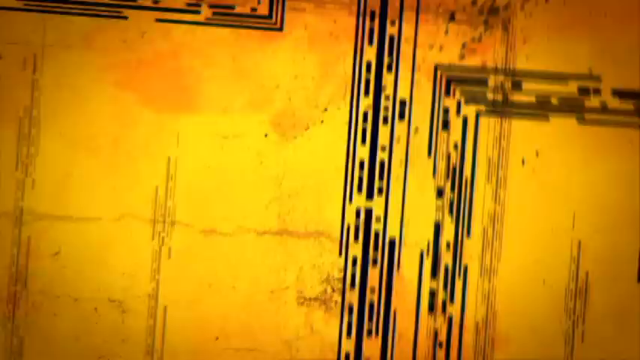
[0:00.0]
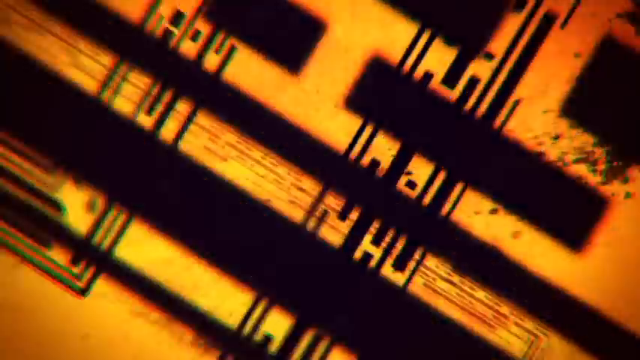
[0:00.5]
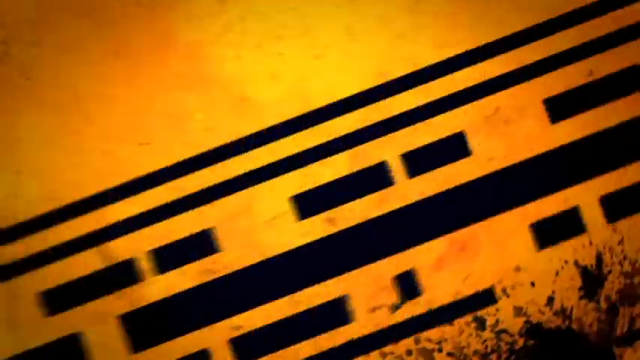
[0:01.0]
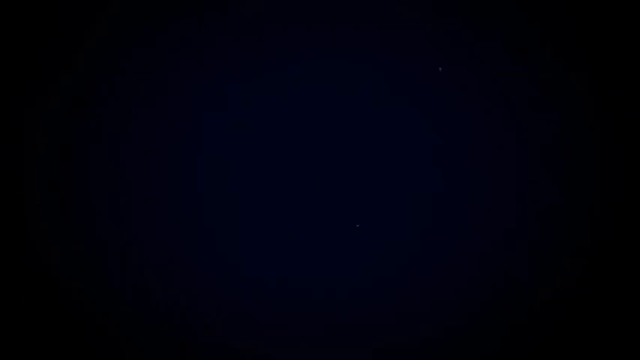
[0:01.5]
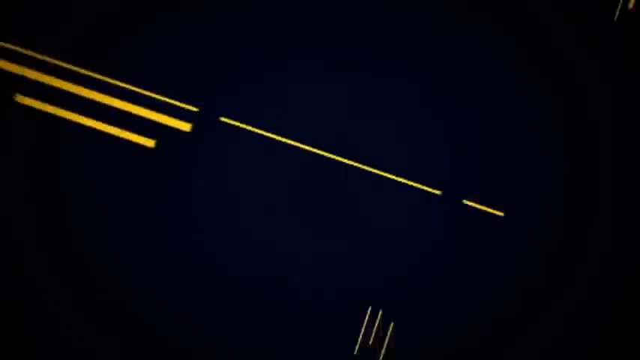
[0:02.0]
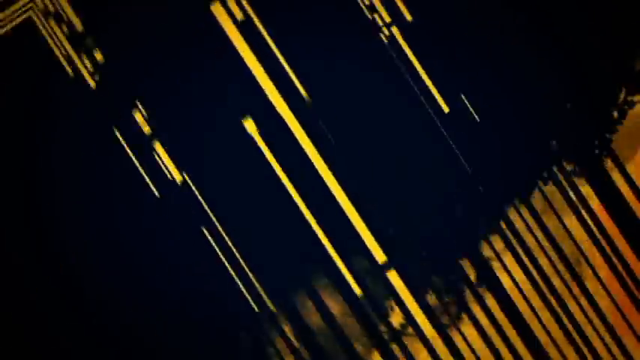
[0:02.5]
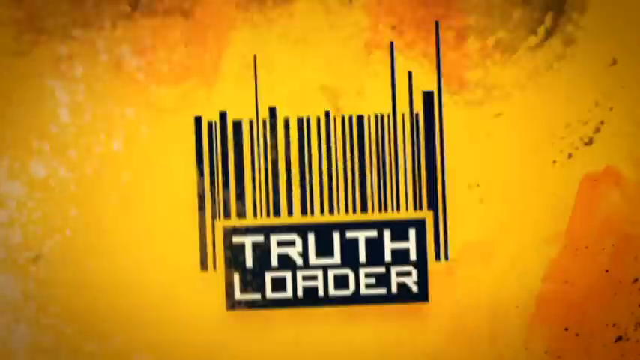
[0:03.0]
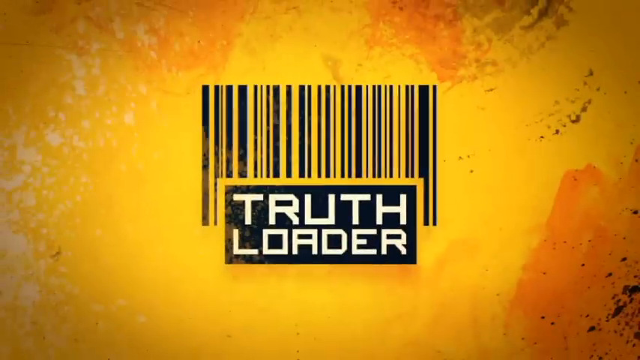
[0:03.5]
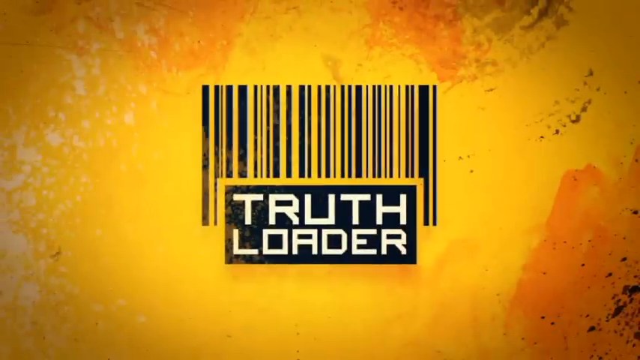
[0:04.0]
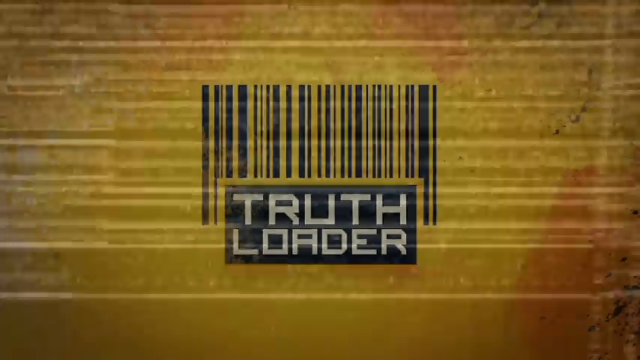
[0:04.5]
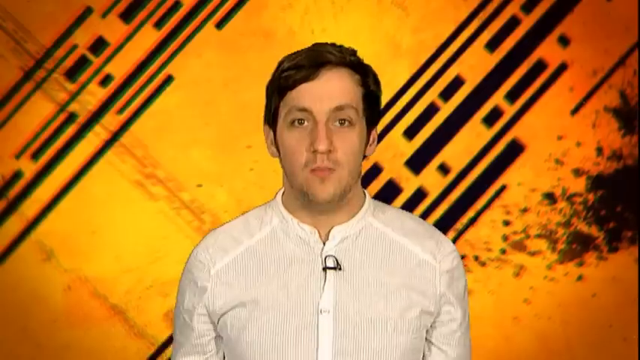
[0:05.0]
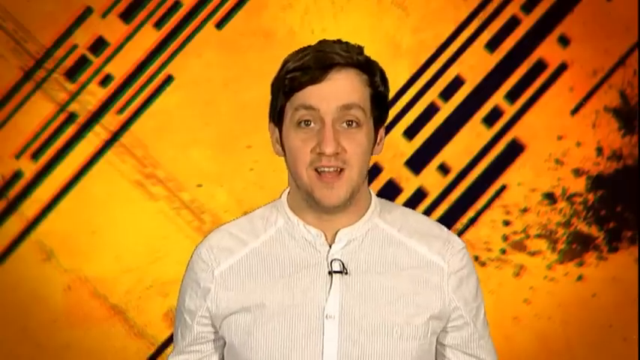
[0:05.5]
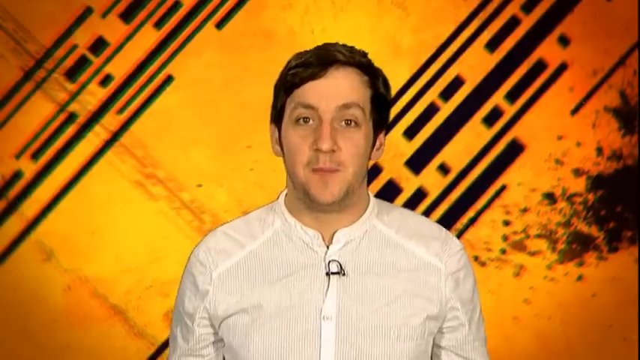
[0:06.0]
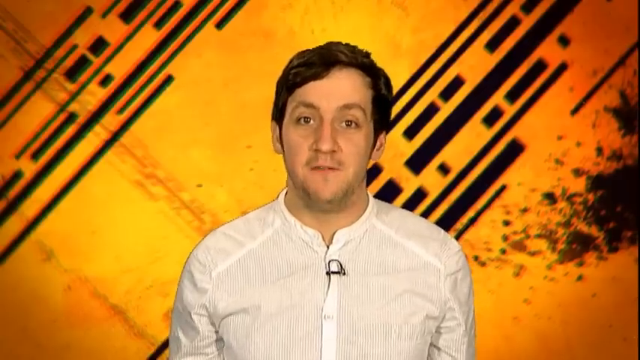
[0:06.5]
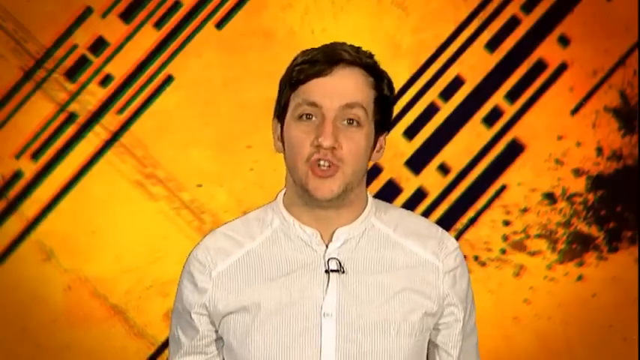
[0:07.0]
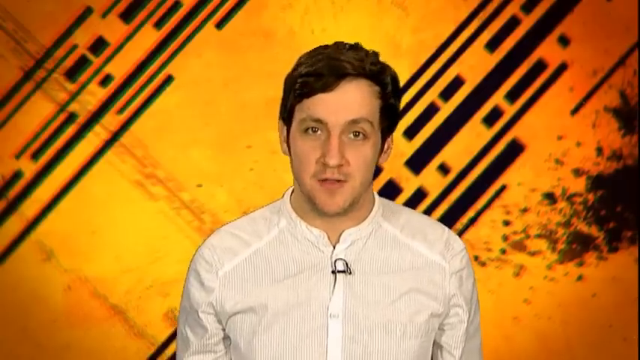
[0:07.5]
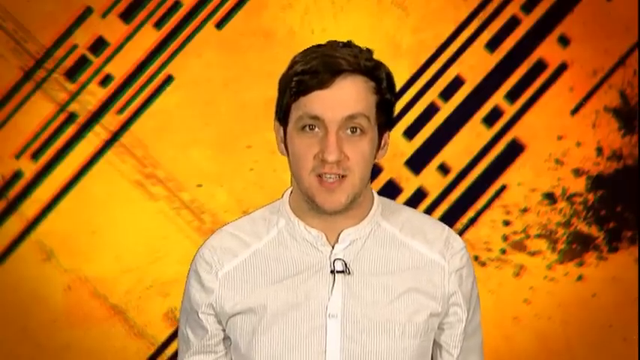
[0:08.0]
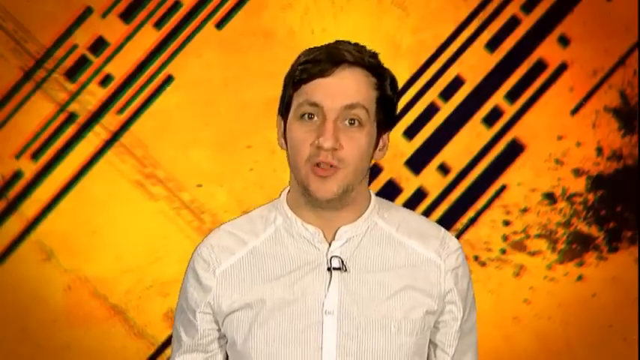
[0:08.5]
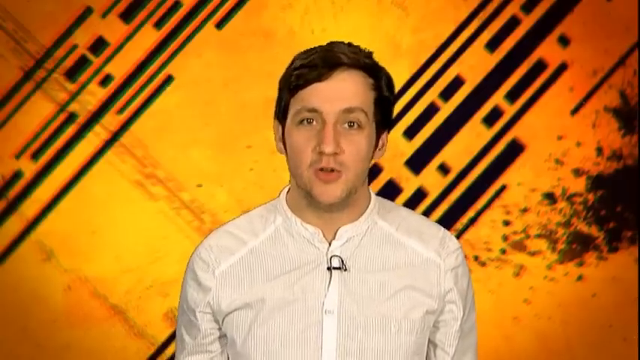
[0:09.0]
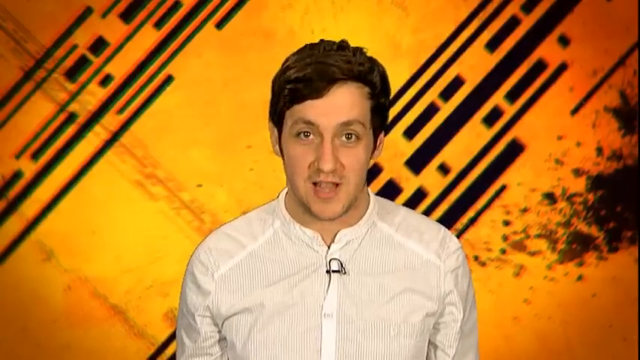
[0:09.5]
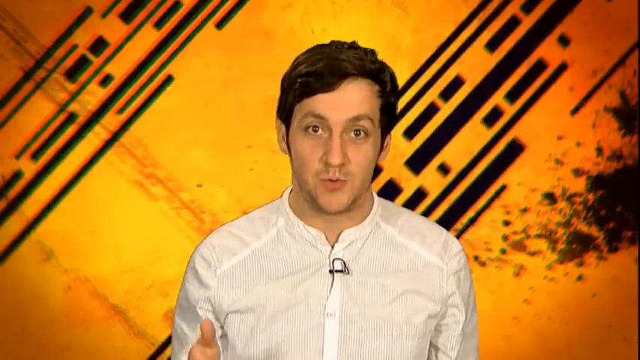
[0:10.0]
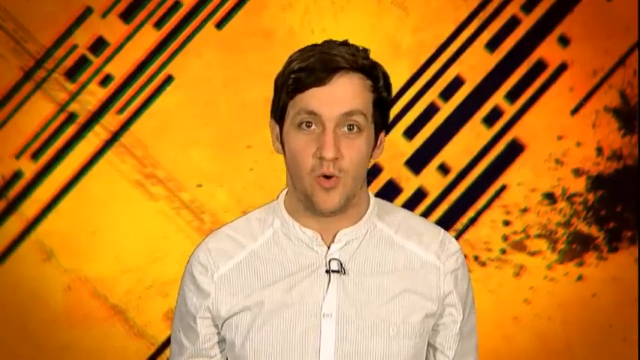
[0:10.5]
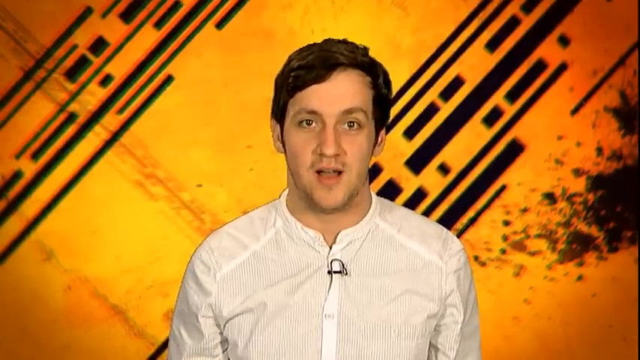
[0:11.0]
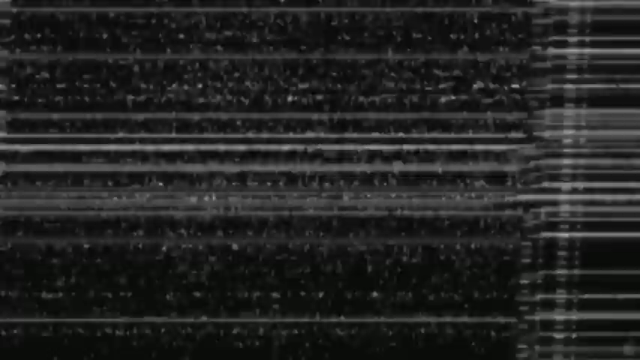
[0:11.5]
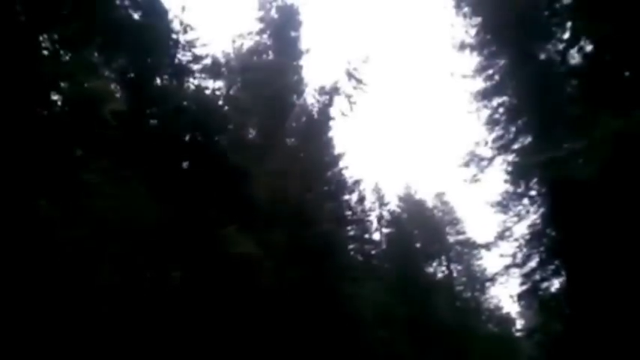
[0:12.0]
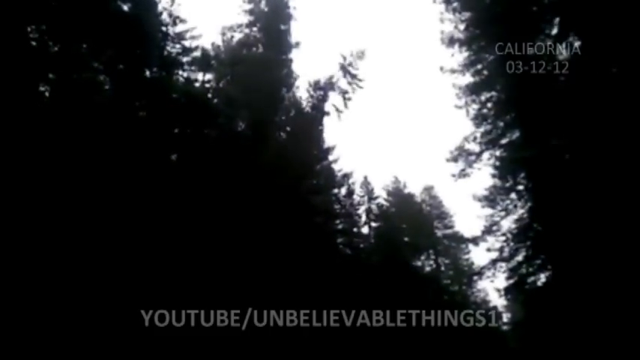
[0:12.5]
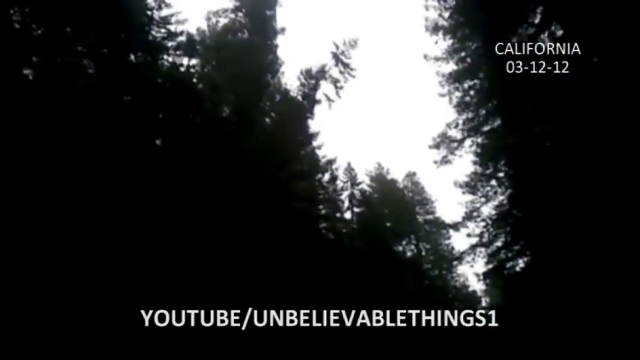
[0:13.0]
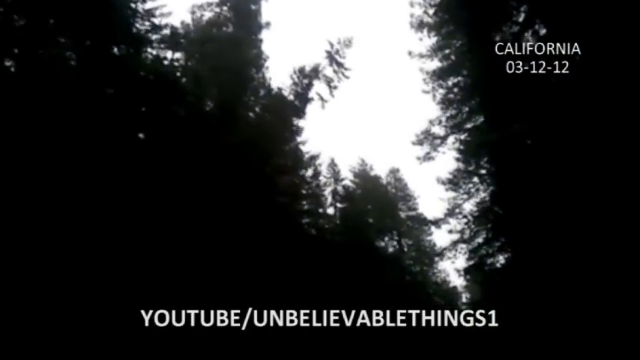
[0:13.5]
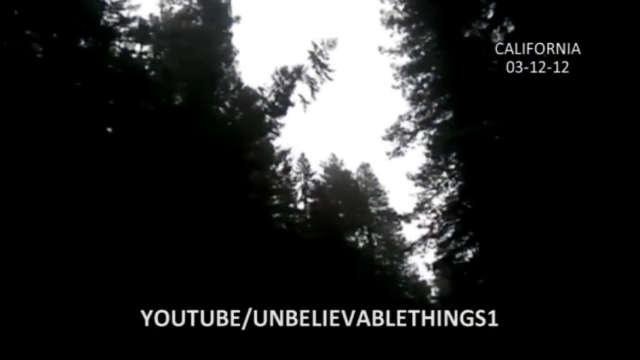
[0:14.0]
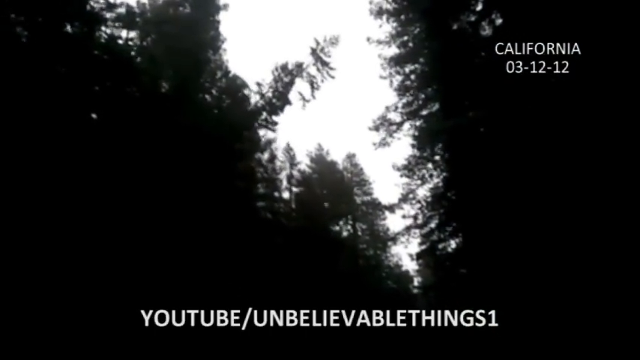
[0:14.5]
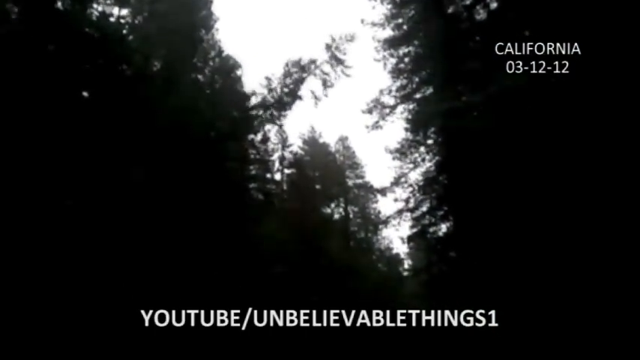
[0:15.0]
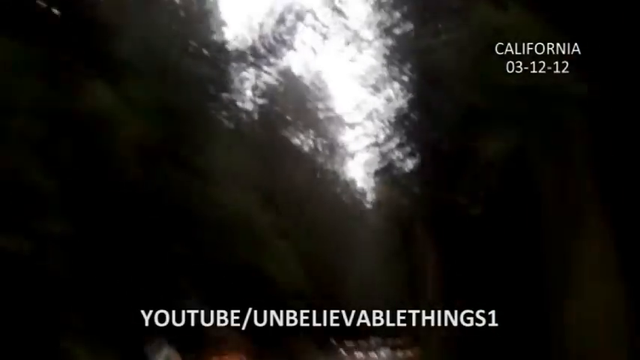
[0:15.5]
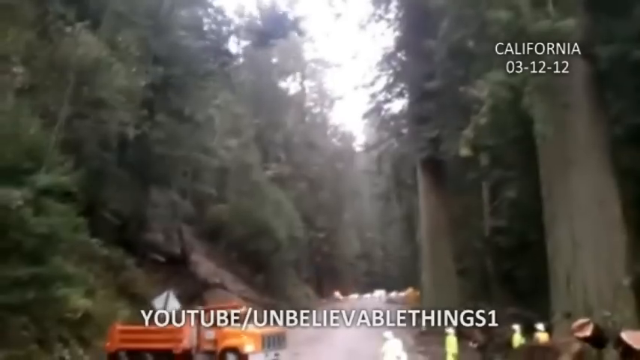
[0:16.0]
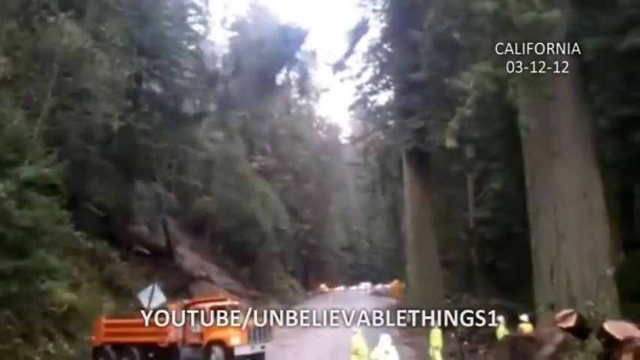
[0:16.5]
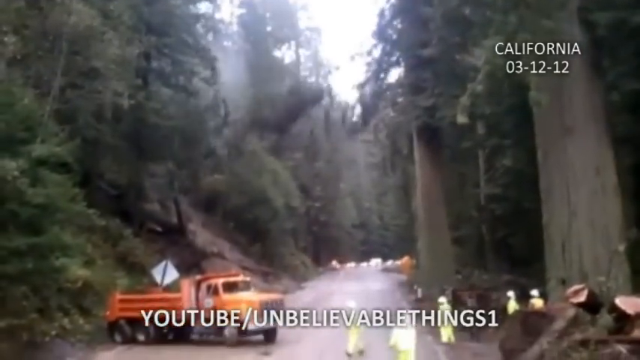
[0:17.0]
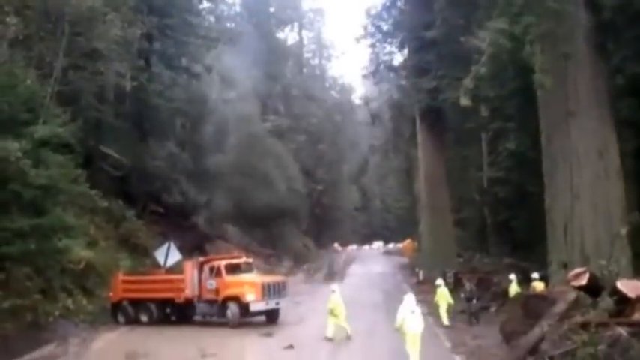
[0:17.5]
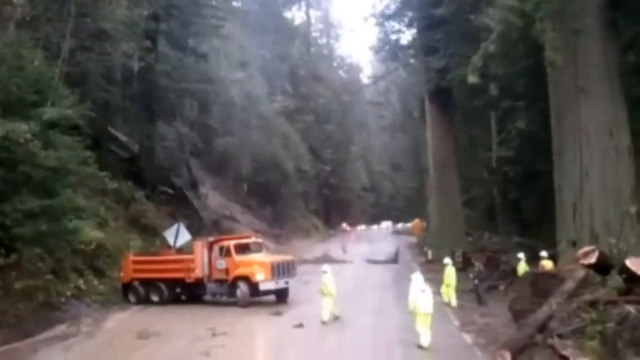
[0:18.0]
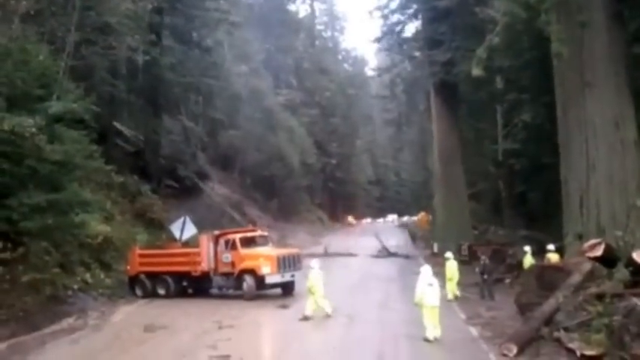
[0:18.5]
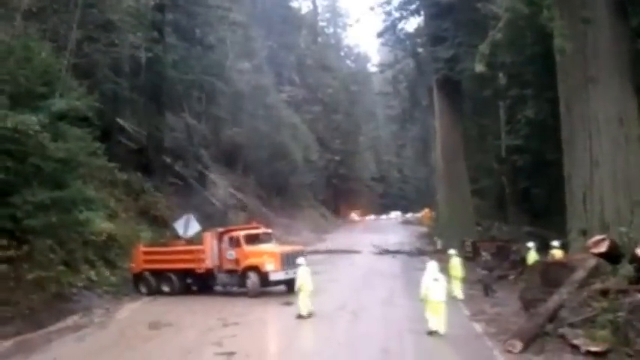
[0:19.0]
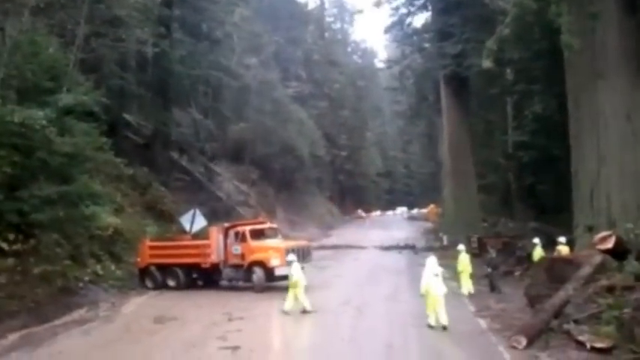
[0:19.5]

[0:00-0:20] The video opens with yellow and navy blue tones, then transitions to yellow and black tones. A logo for a company named Truth Loader appears, with a barcode on top of it. A young white man with dark hair and a white button-down shirt appears and seems to be introducing what comes next. The video then cuts to footage of a tree falling on a narrow road in California on March 12, 2012, uploaded to YouTube by a user whose name is shown at the bottom of the video.